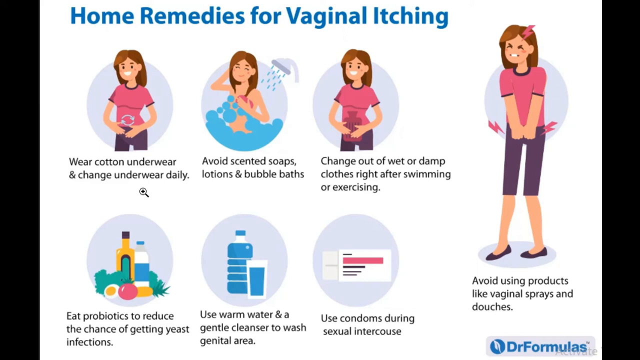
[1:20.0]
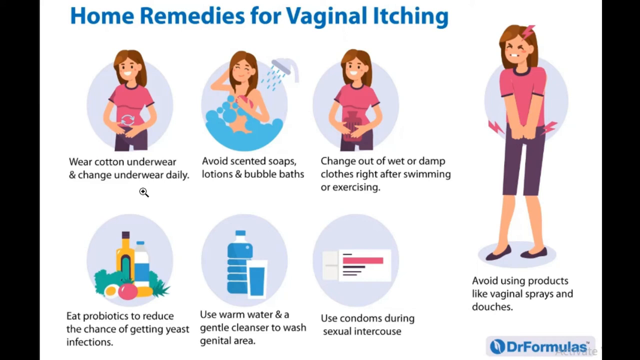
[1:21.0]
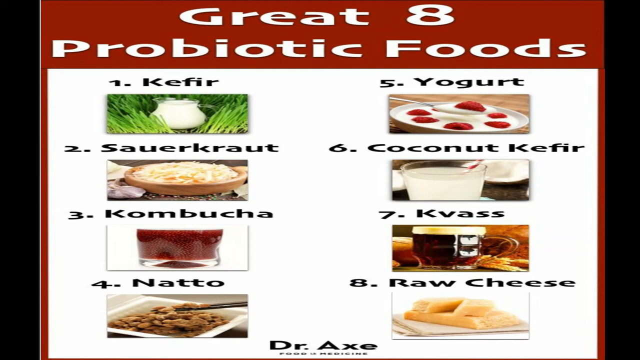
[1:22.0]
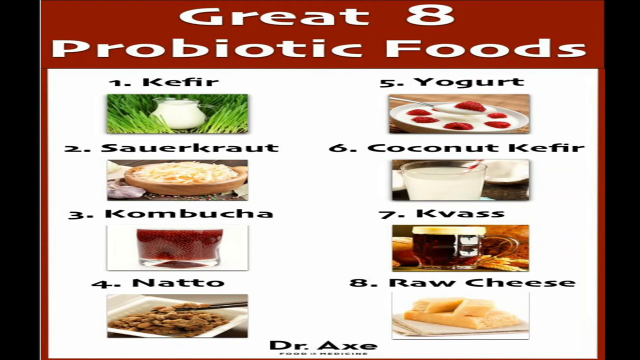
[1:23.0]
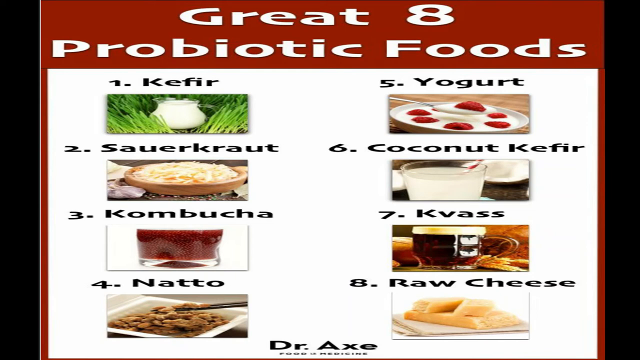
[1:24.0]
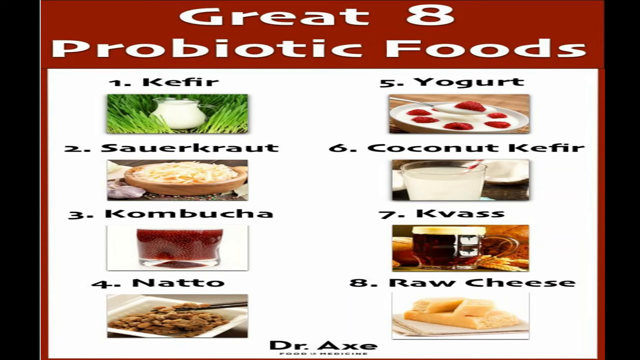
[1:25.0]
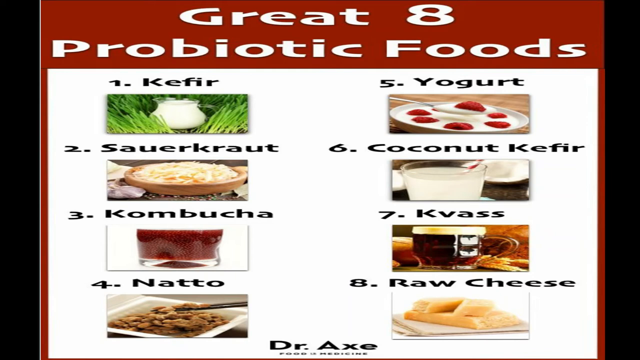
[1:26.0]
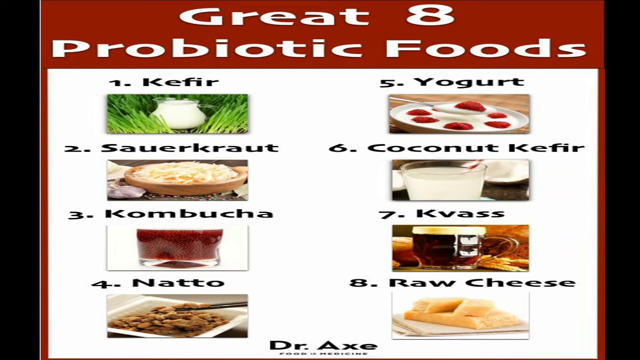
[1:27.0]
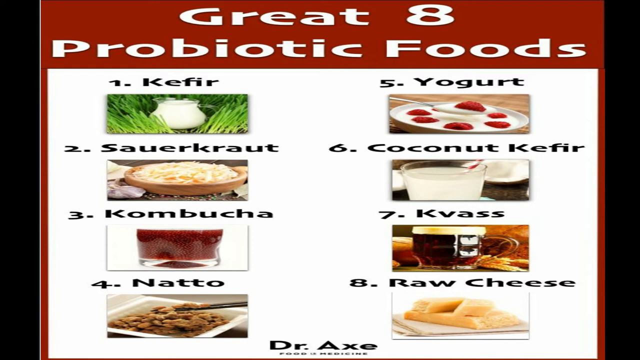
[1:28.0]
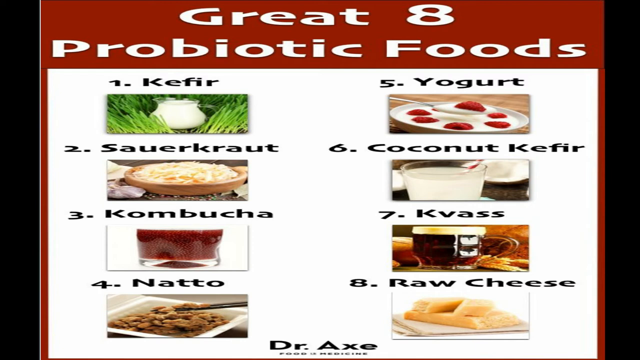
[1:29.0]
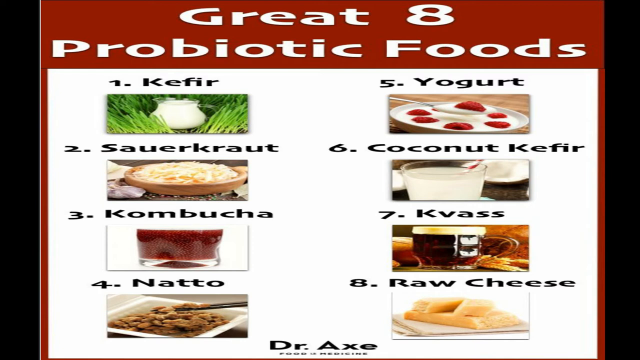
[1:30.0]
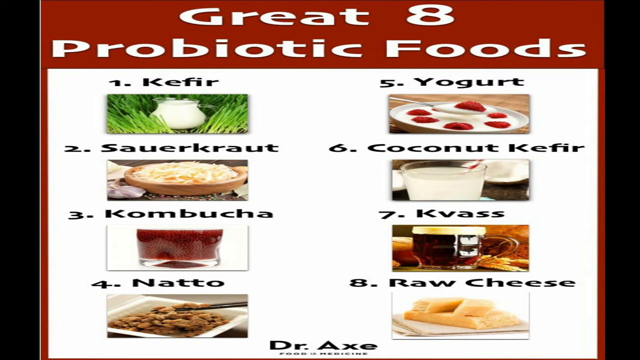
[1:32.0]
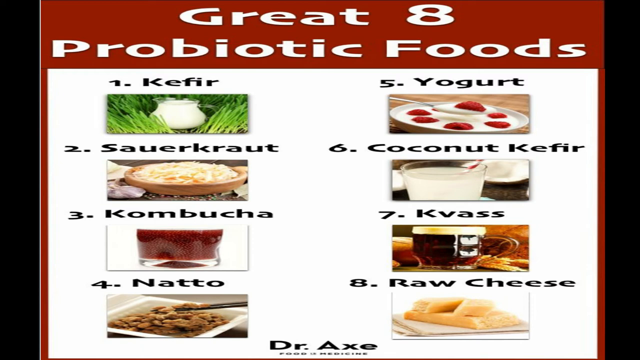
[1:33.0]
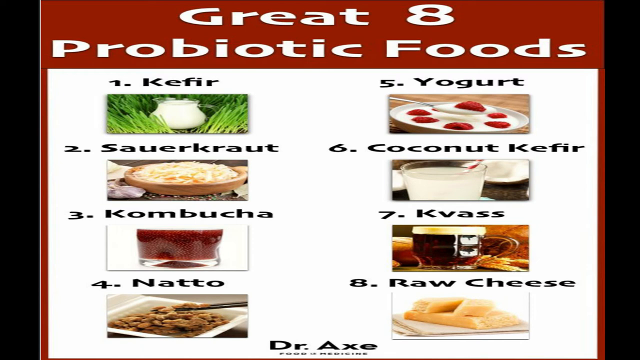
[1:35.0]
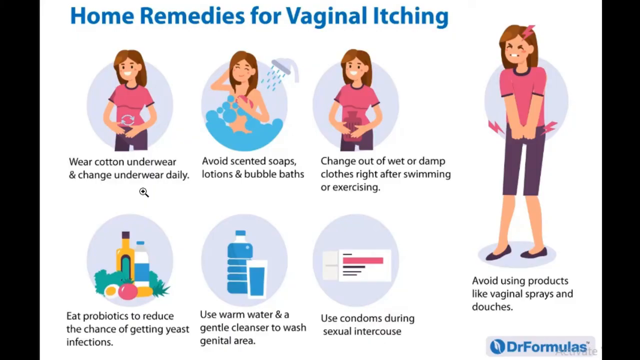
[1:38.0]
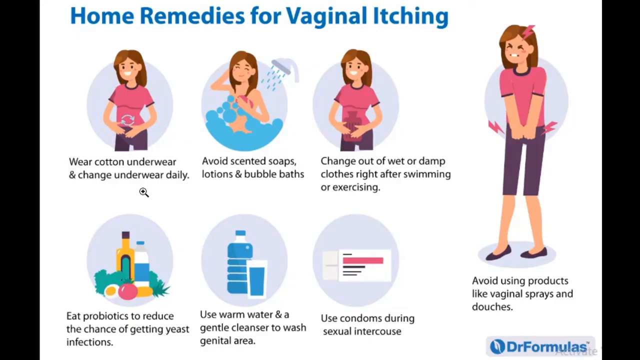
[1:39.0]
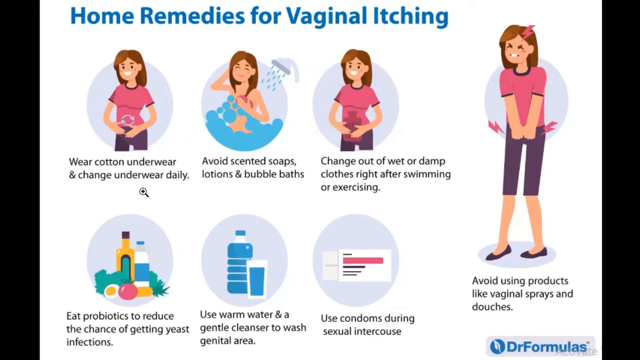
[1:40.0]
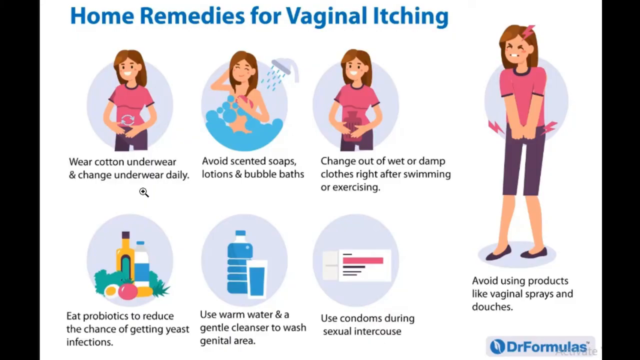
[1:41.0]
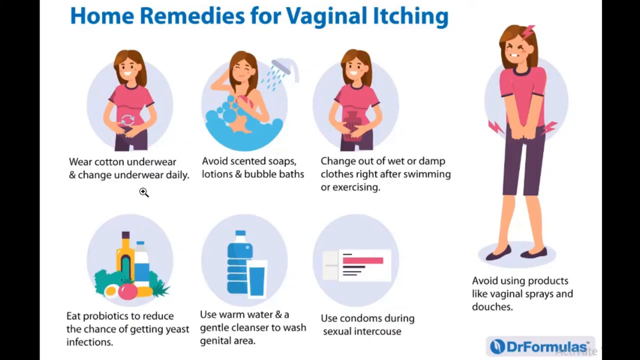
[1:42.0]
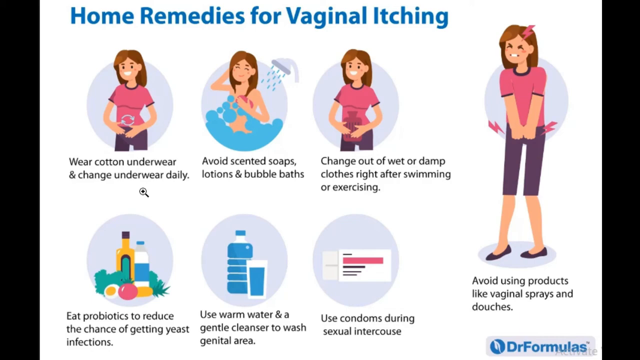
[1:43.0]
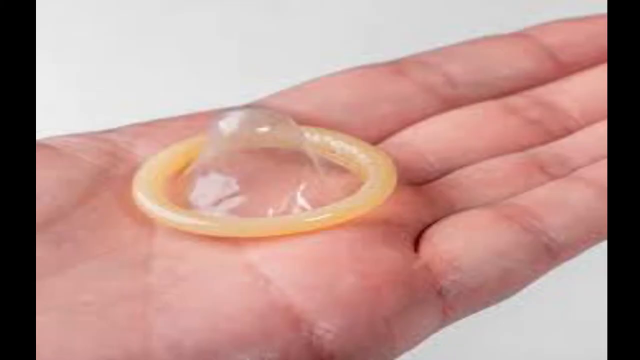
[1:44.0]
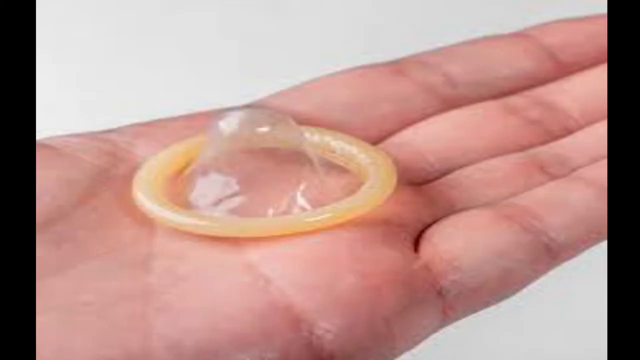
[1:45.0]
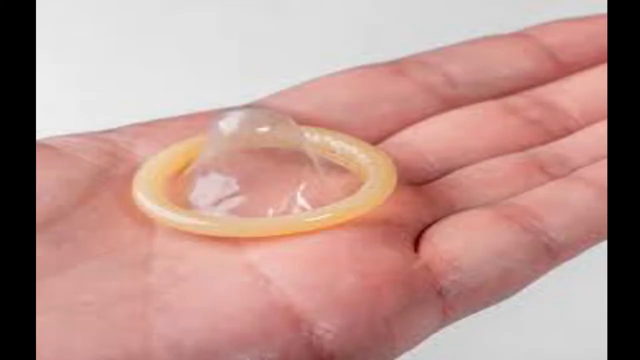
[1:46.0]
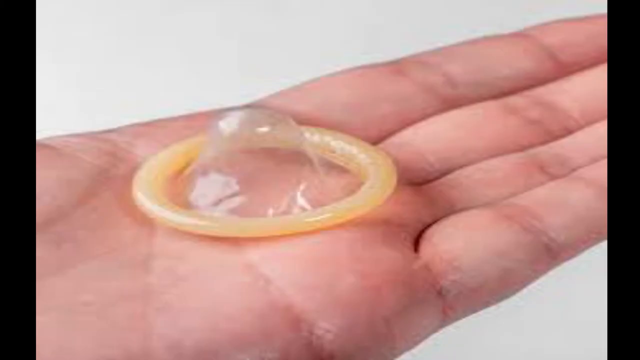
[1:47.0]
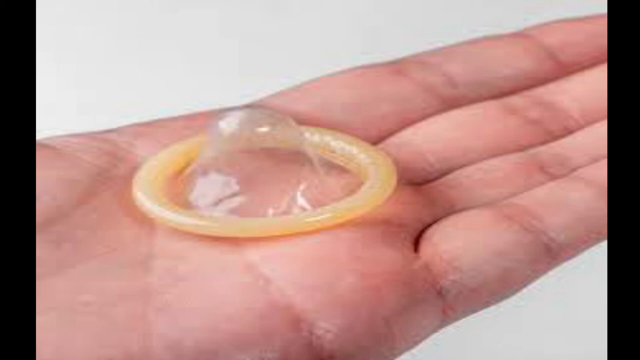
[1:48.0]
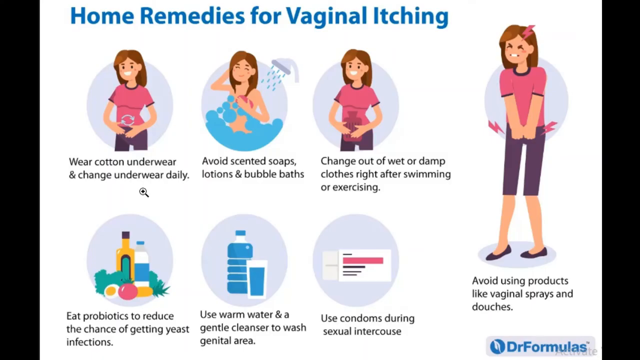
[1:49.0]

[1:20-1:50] A screen with a white background and a red banner reads "Grade 8 Probiotic Foods" in bold white text. It lists eight foods in boxes, each with an image of the item, including yogurt, coconut, raw cheese, kombucha, natto and sauerkraut. The sauerkraut is shown as a large serving in a brown bowl, the kombucha is a red or dark colored drink, and the raw cheese is yellow. The coconut appears dark and white, alongside a glass of clear coconut water. Below the image, "Dr. X" appears in bold dark text.